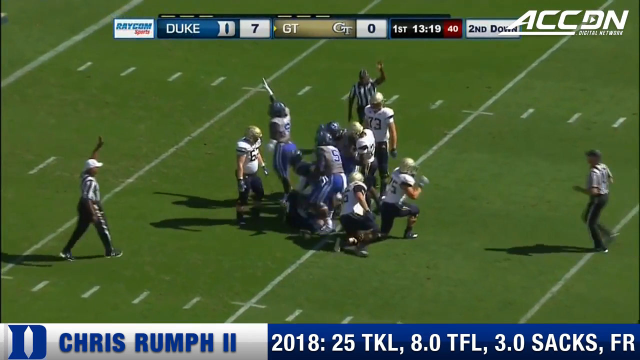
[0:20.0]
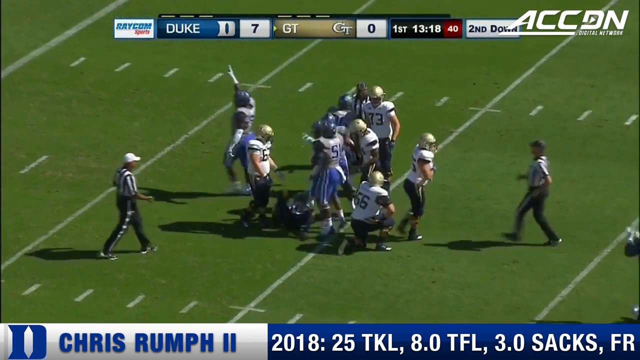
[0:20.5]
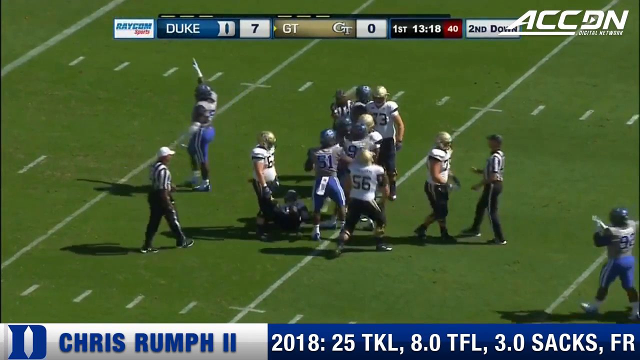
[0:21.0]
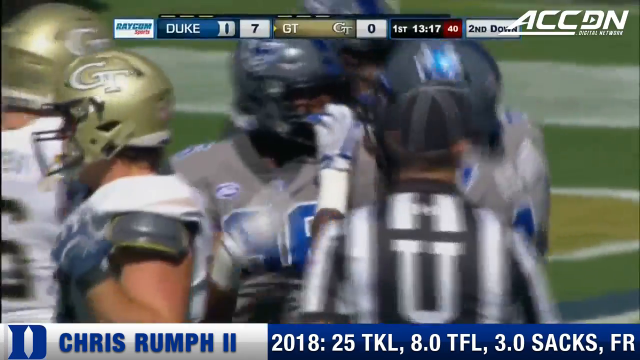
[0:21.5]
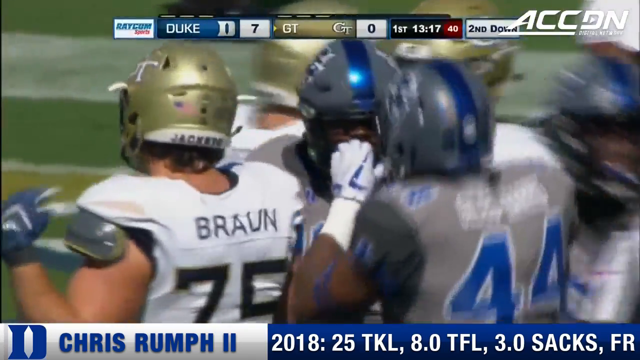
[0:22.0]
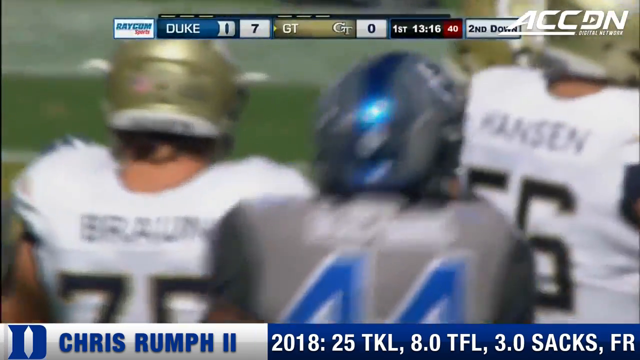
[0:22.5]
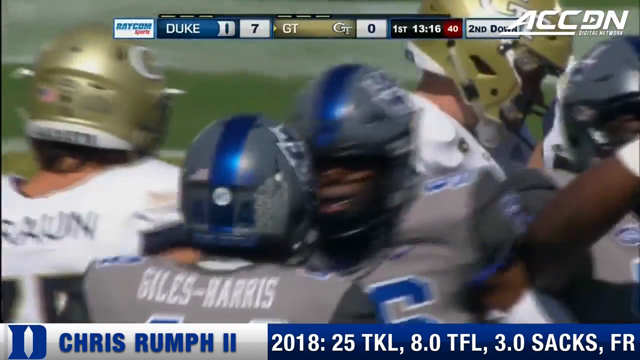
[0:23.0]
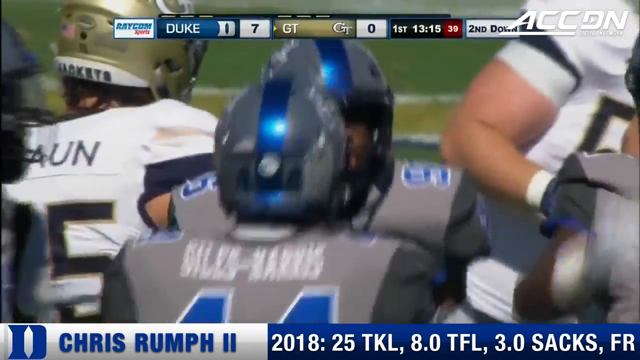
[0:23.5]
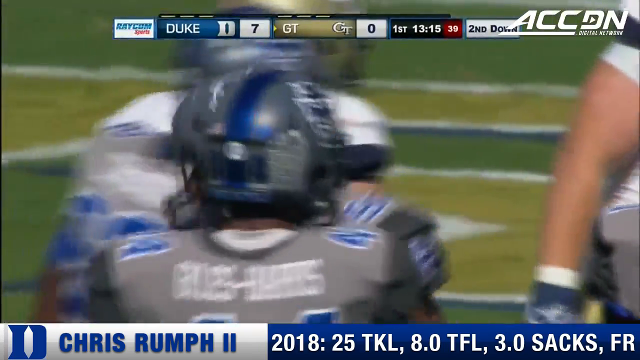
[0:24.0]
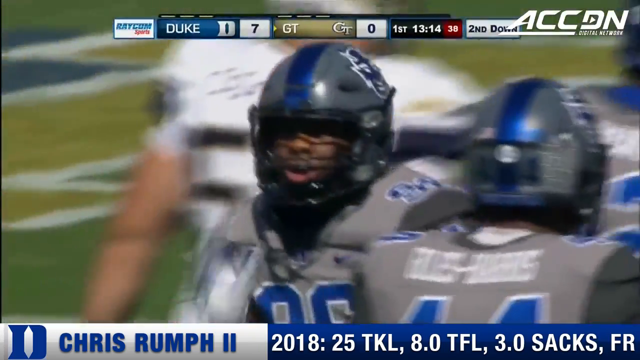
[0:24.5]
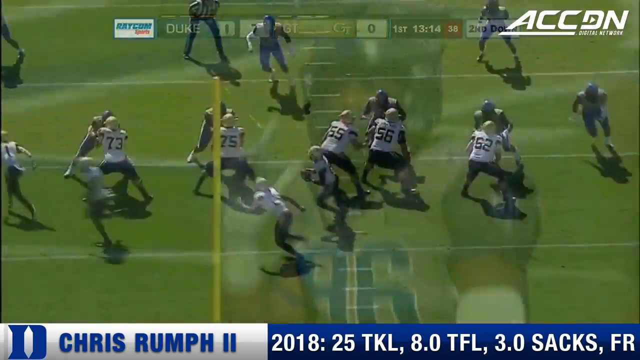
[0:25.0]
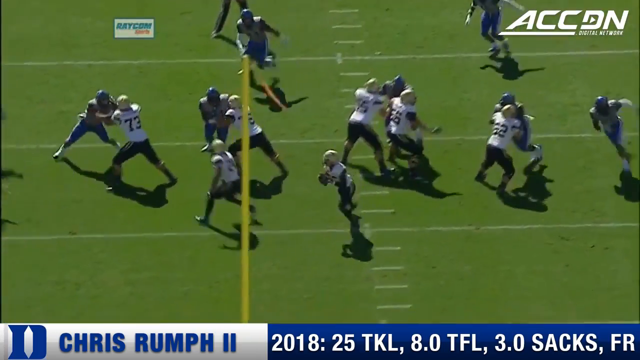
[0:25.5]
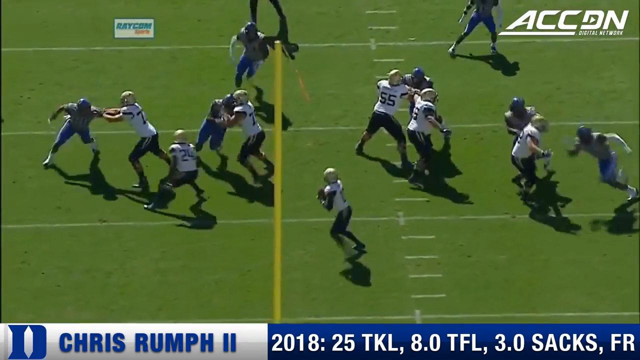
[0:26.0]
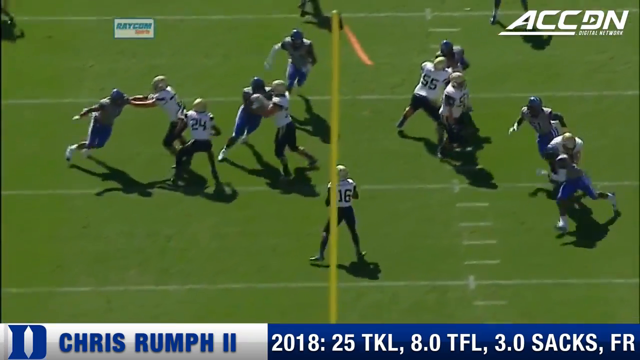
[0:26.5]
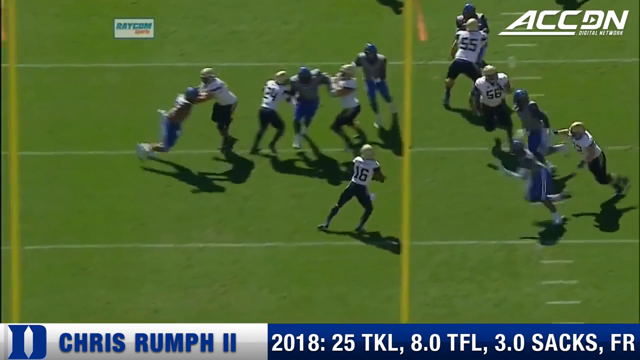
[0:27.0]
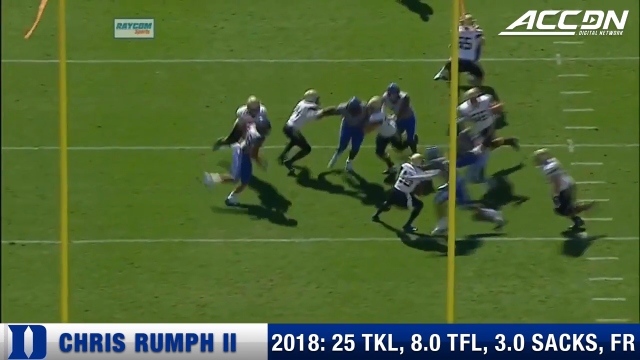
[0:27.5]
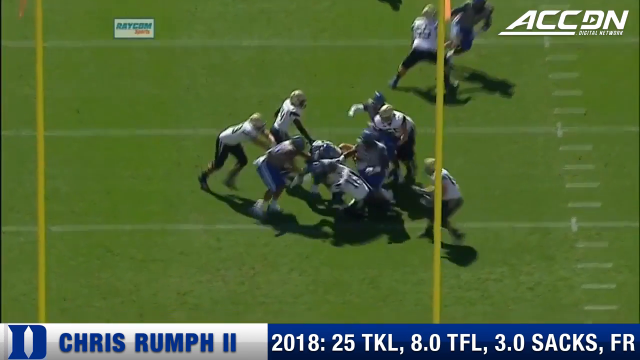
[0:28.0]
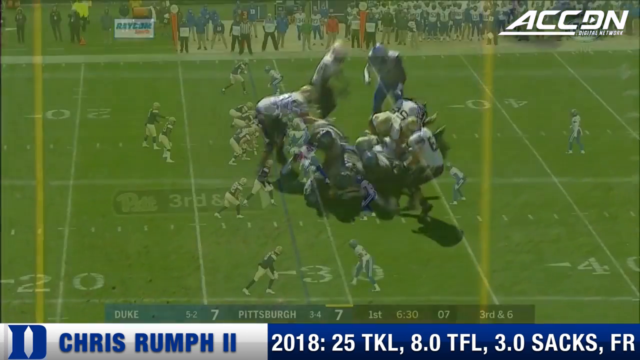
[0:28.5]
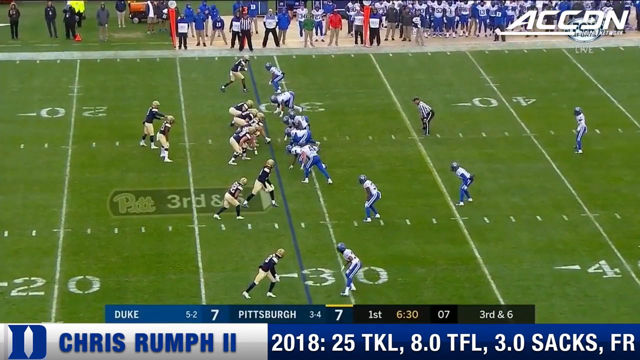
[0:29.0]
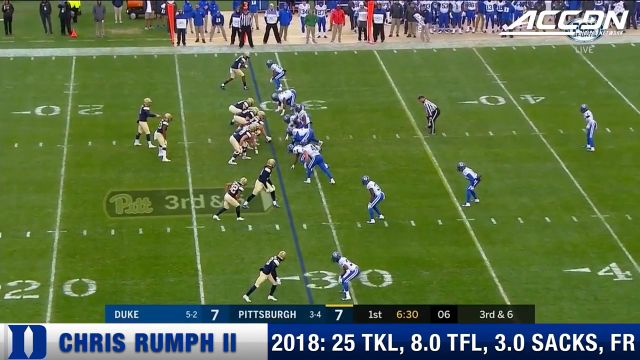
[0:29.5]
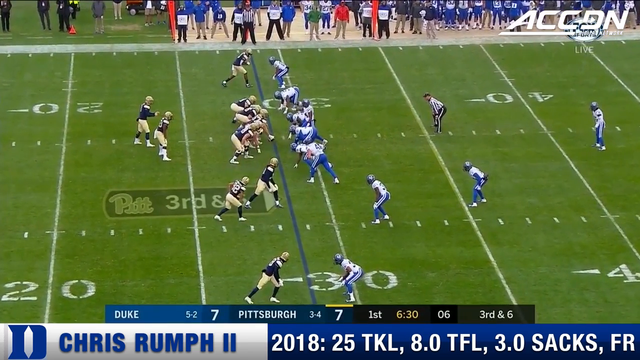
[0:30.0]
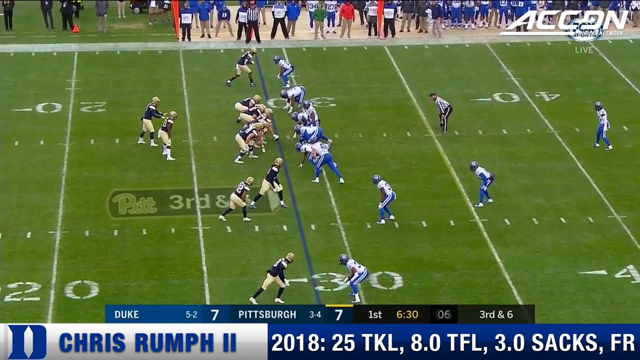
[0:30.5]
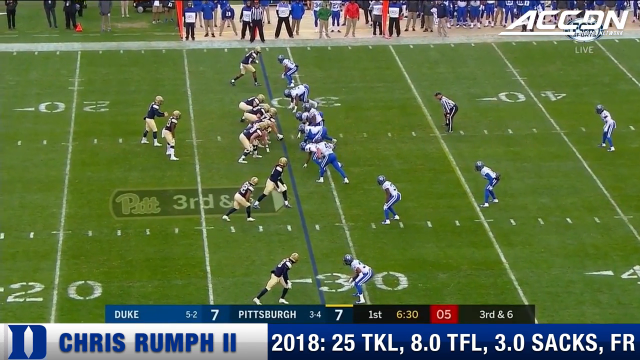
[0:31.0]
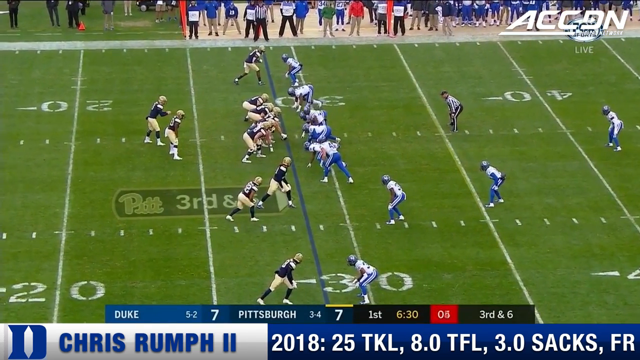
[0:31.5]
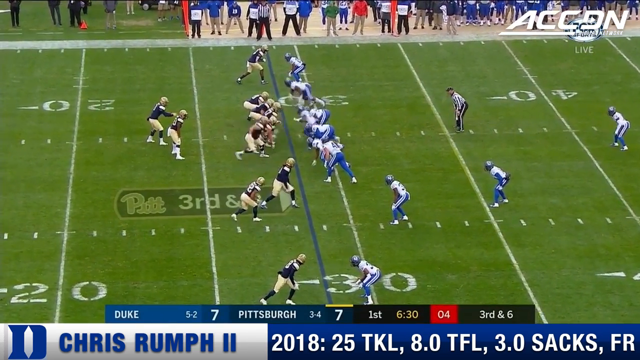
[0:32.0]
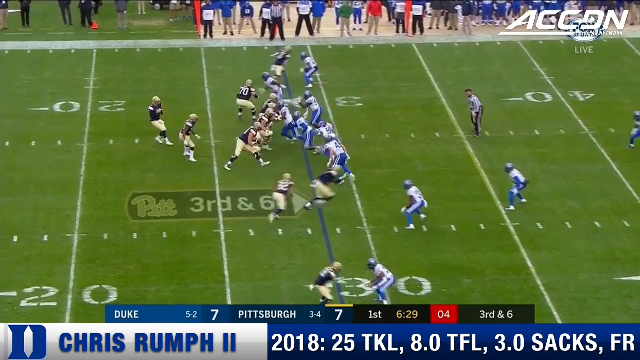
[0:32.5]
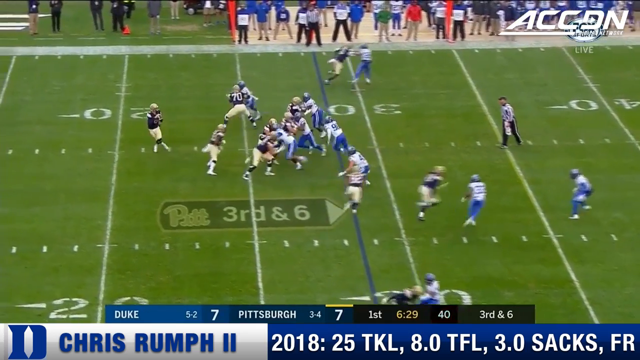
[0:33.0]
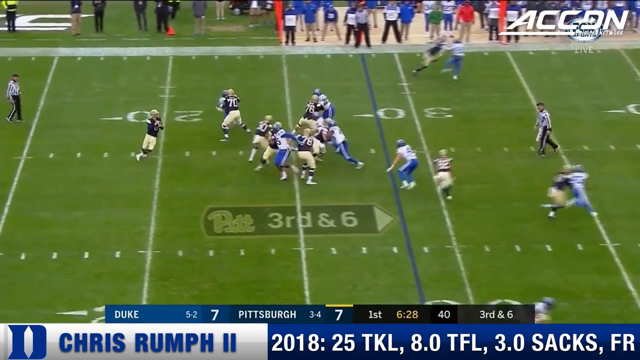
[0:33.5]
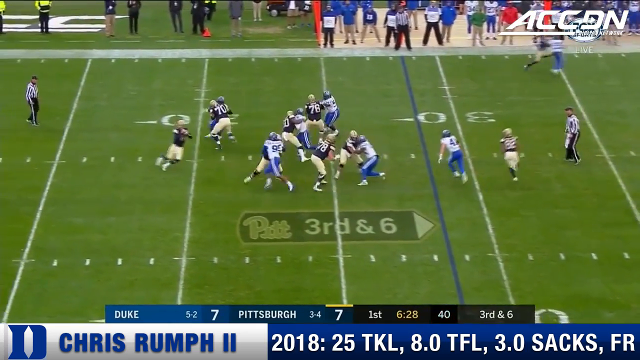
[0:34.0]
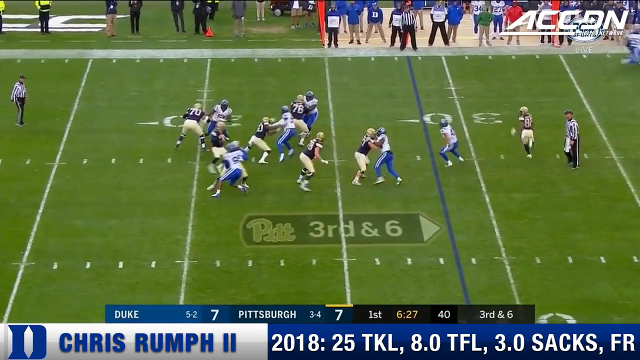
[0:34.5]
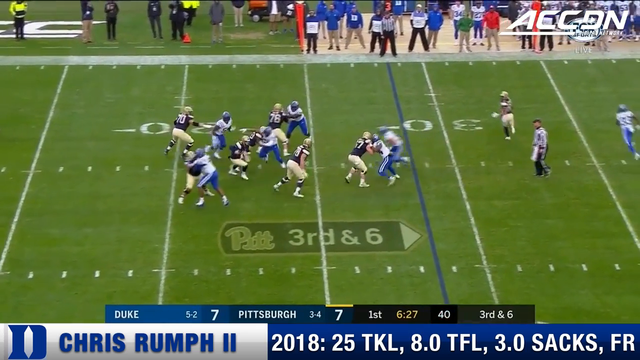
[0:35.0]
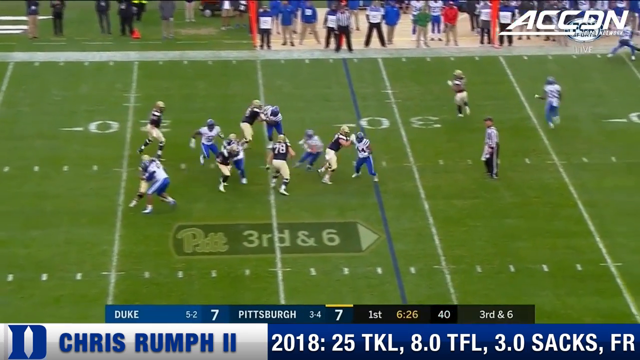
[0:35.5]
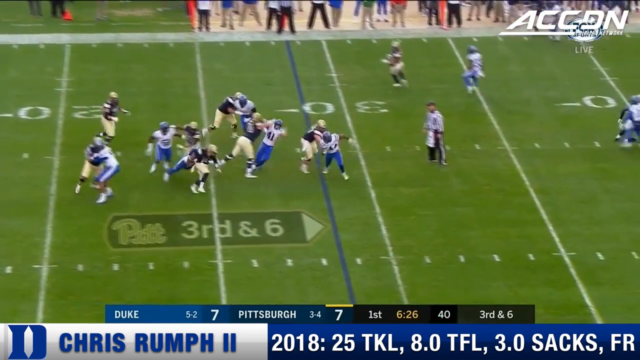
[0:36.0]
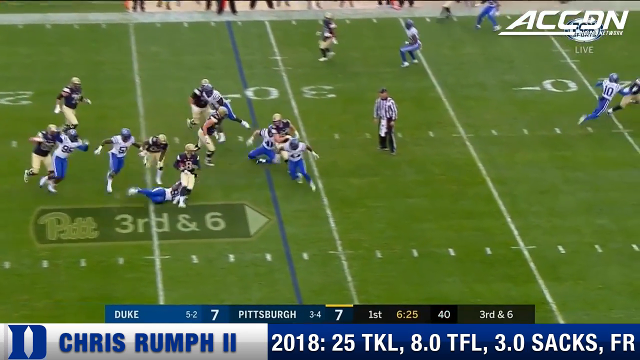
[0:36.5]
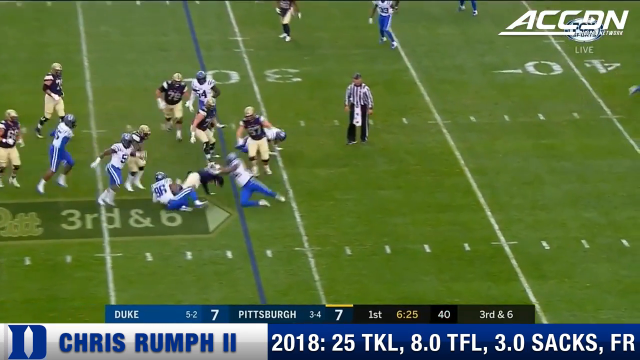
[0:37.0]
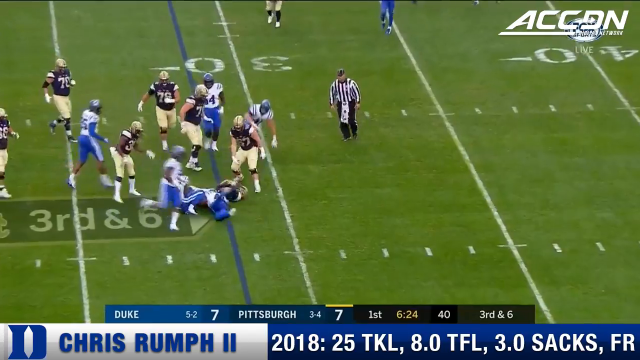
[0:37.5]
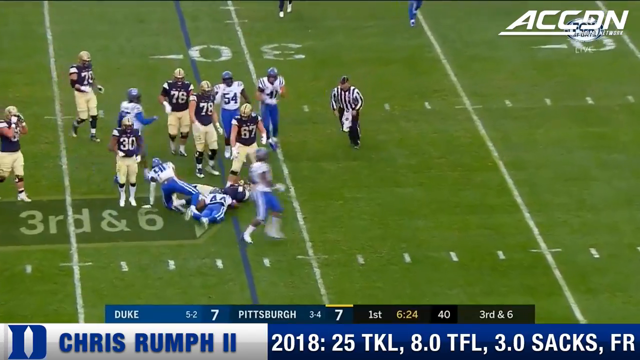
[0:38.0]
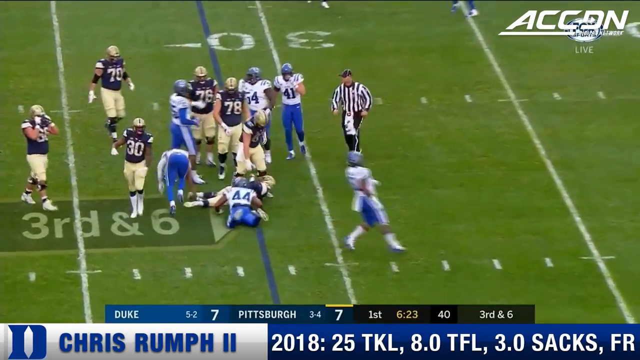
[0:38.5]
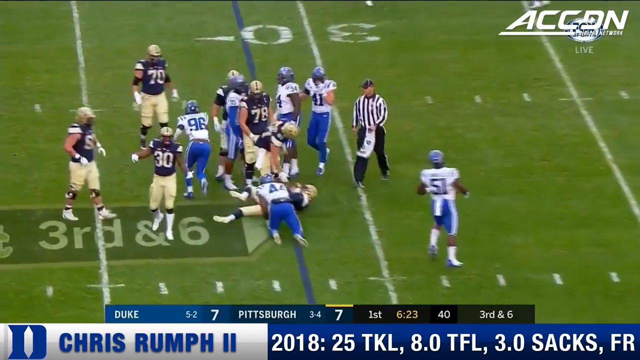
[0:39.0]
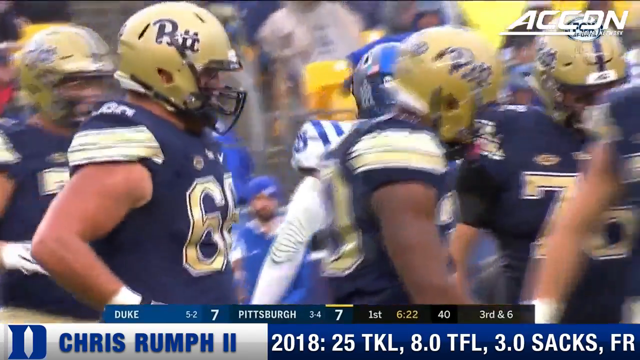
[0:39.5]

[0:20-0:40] Players are piled on top of each other and are getting up, with some hopping around in excitement. A chyron at the top of the screen shows Duke with a score of 7 and GT with a score of 0, with three little white lines above each team's name. It is the first quarter with 13 minutes and 16 seconds on the clock, and the play was a second down. The camera zooms in on players wearing gray and blue who are celebrating and high-fiving each other. A replay shows the quarterback trying to throw the ball and players sacking him. The video then cuts to another game, with players at the line of scrimmage; one team wears blue and gold, the other white and blue. A chyron at the bottom shows Duke with a score of 7 and Pittsburgh with a score of 7, in the first quarter with 6 minutes and 30 seconds left, on third and six. The blue and gold team snaps the ball to the quarterback, who gets in the pocket. As players rush him, he leans back and scrambles with the ball, but he gets caught by his foot and is tackled.